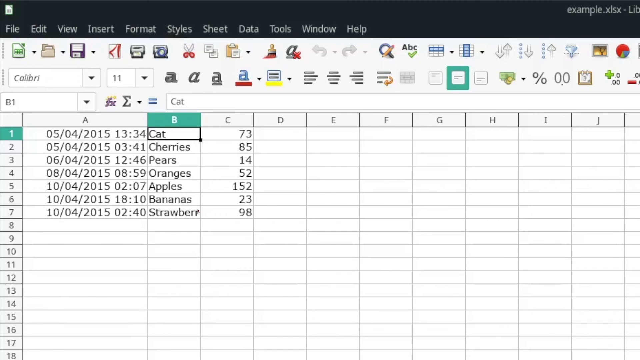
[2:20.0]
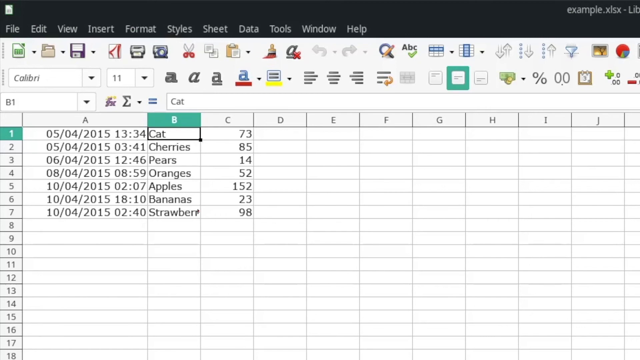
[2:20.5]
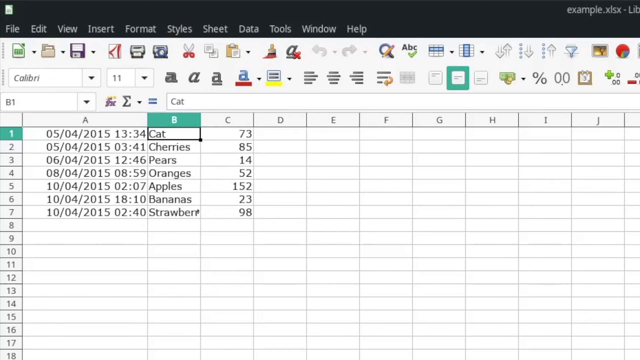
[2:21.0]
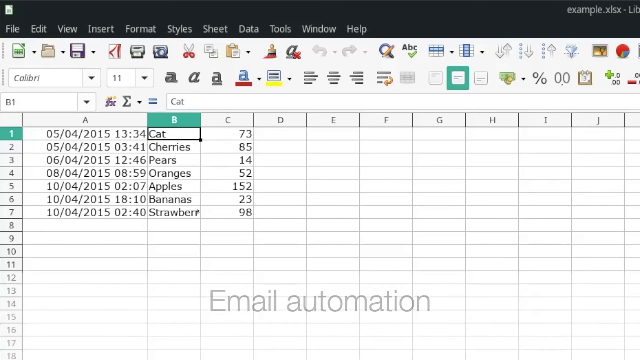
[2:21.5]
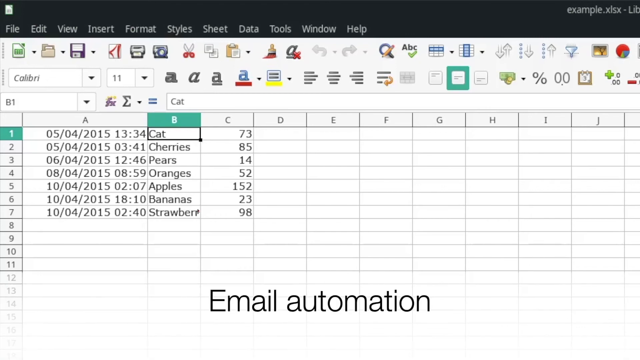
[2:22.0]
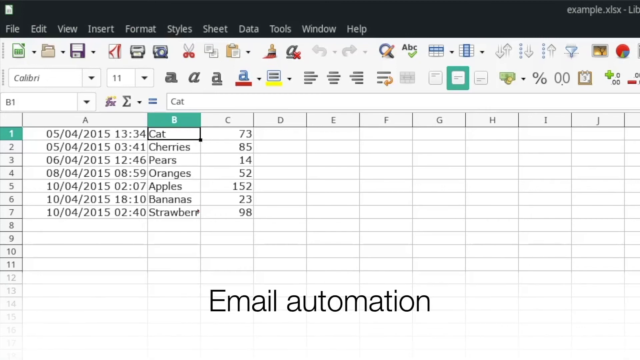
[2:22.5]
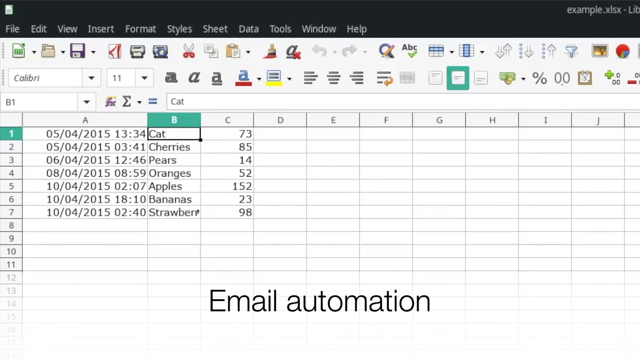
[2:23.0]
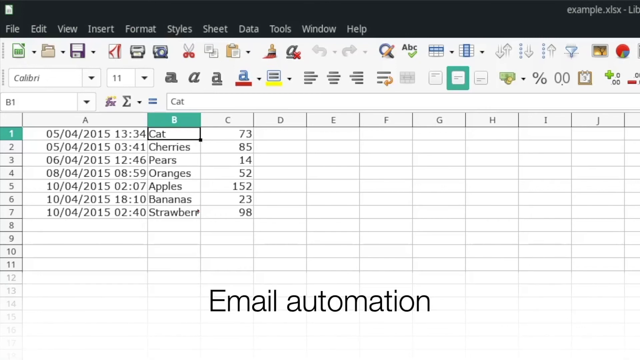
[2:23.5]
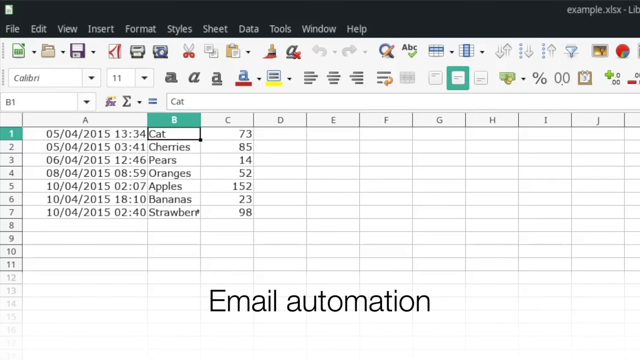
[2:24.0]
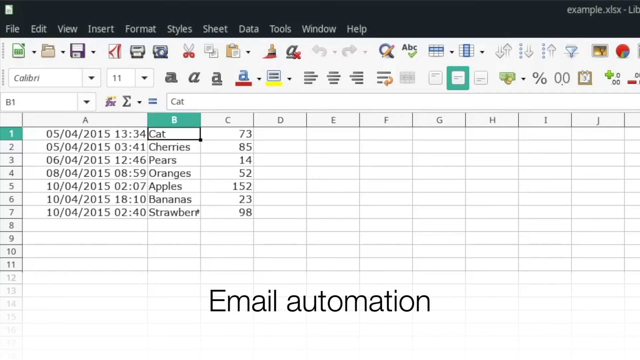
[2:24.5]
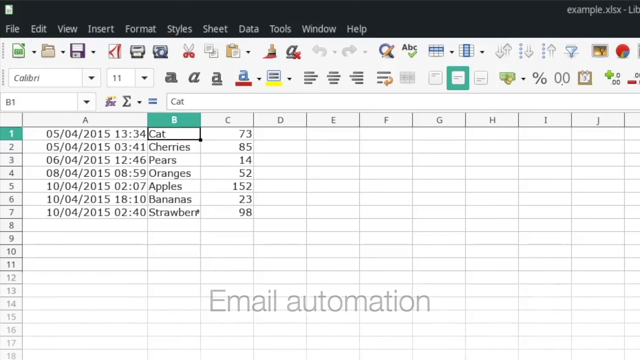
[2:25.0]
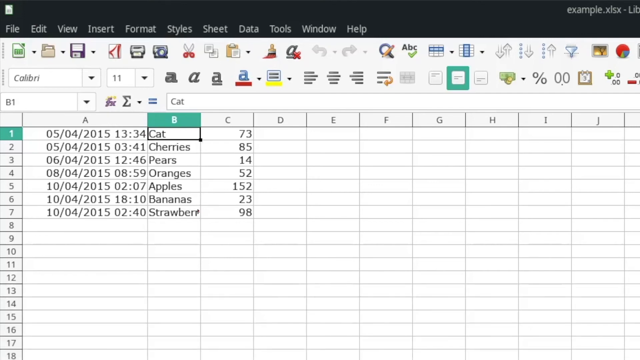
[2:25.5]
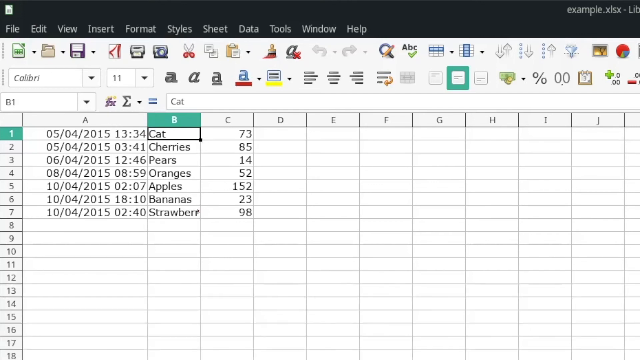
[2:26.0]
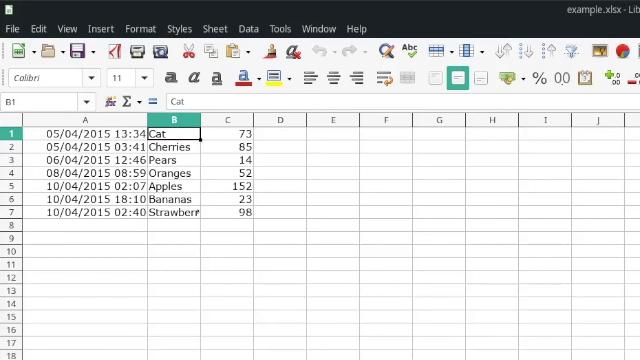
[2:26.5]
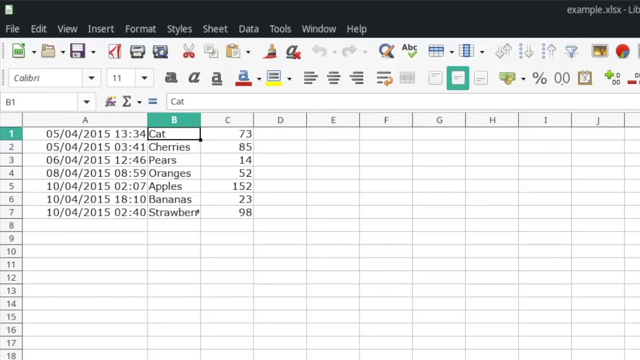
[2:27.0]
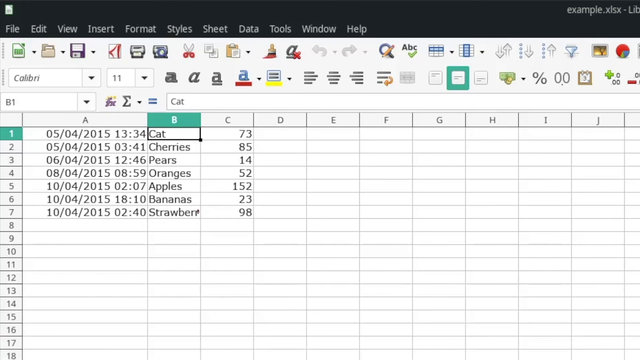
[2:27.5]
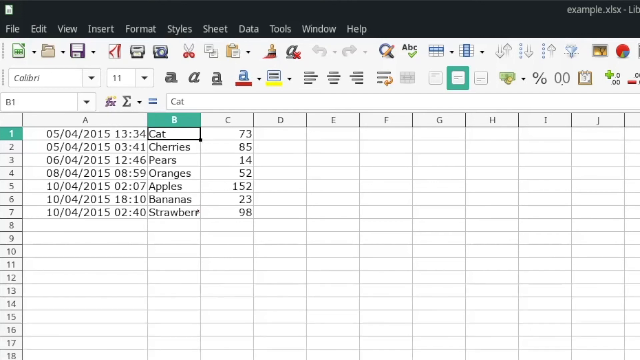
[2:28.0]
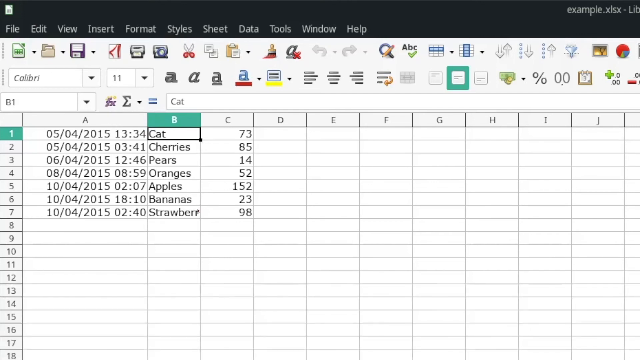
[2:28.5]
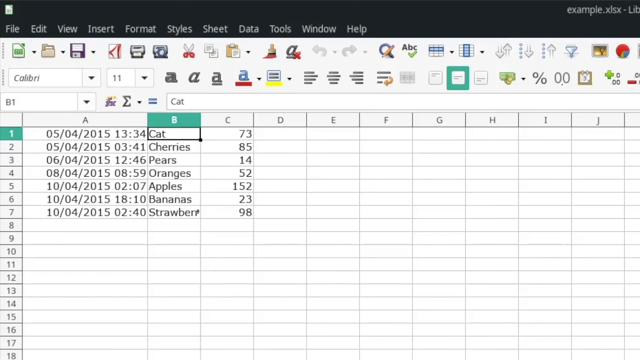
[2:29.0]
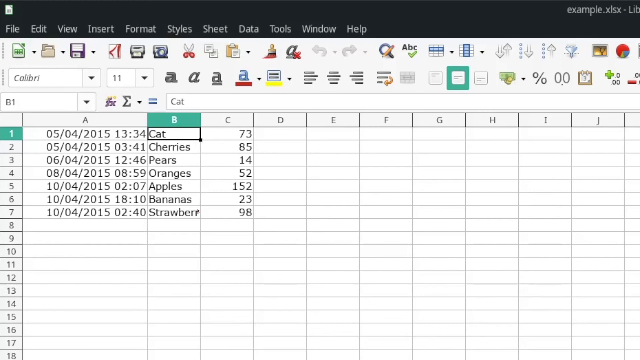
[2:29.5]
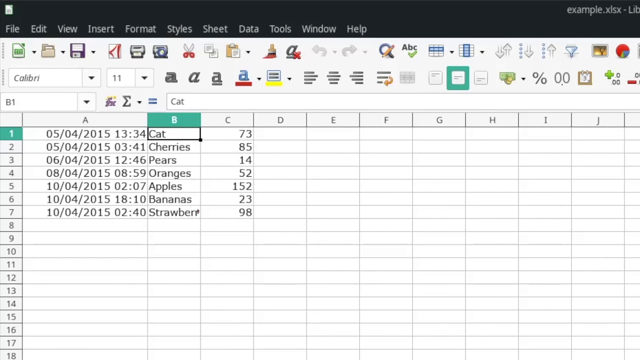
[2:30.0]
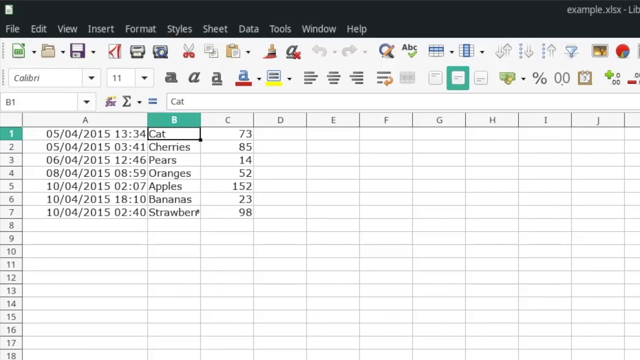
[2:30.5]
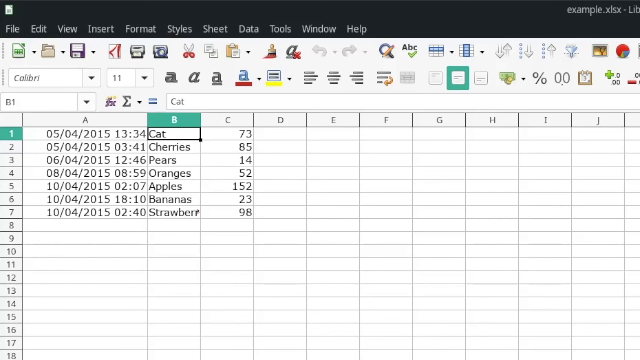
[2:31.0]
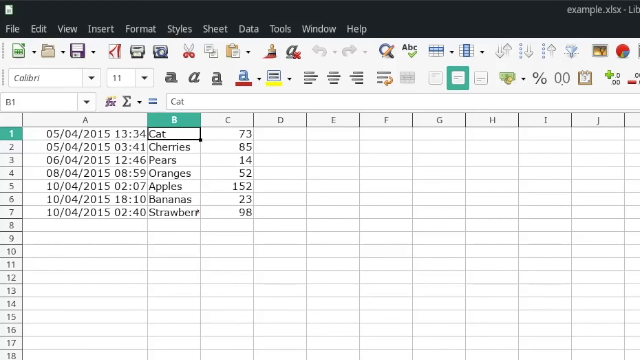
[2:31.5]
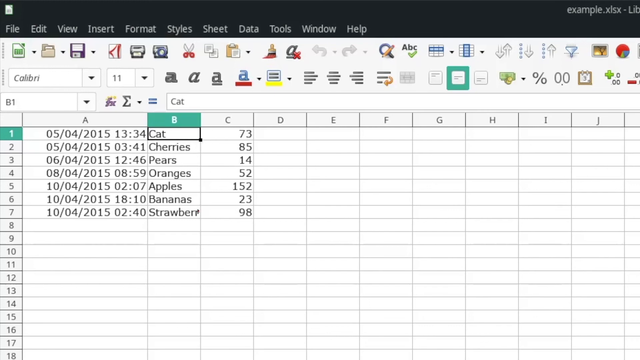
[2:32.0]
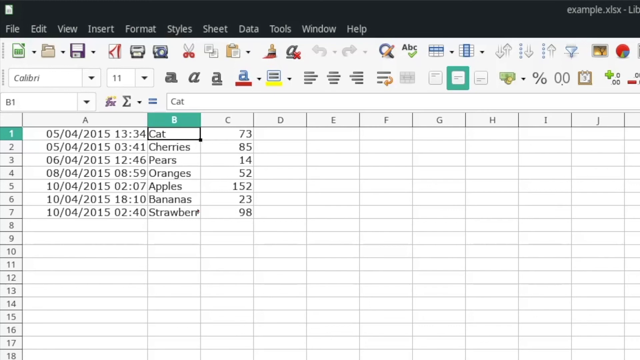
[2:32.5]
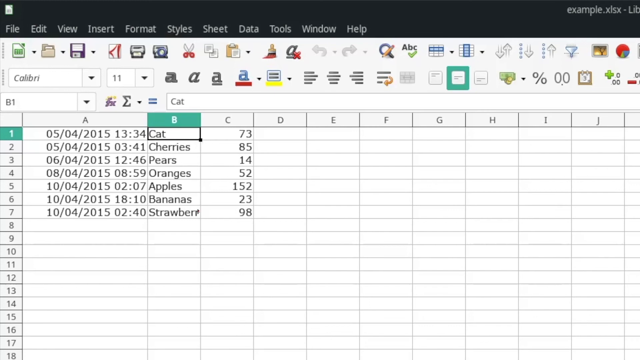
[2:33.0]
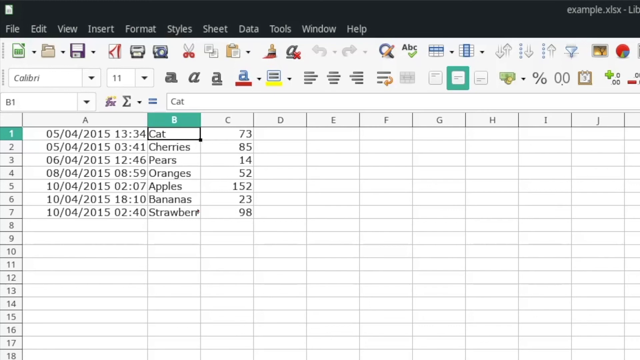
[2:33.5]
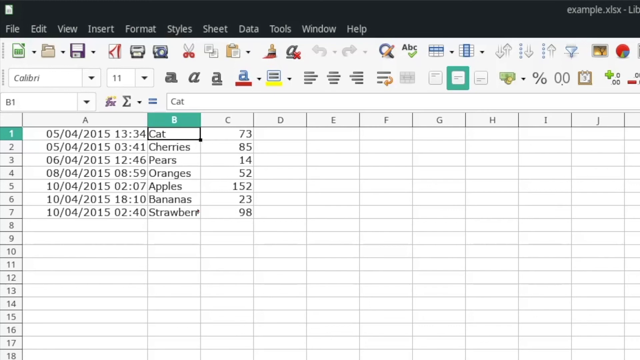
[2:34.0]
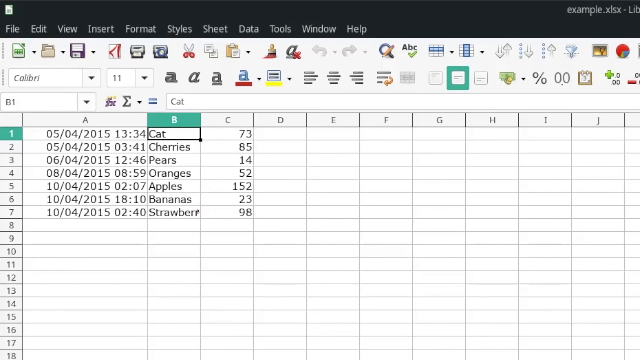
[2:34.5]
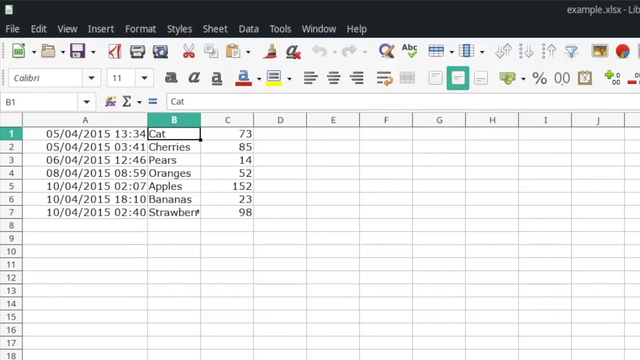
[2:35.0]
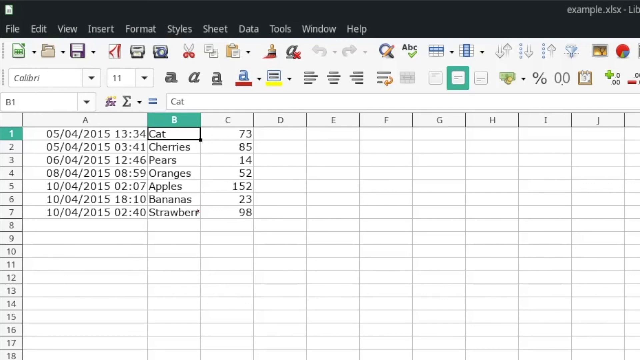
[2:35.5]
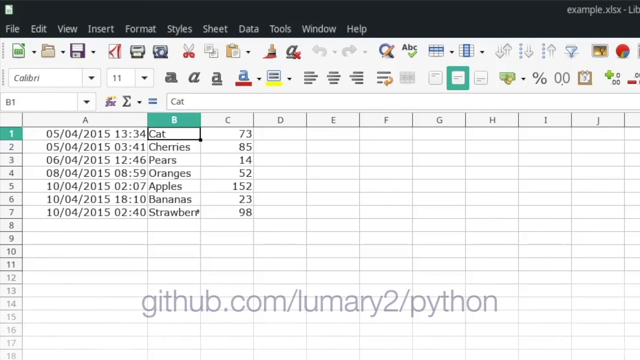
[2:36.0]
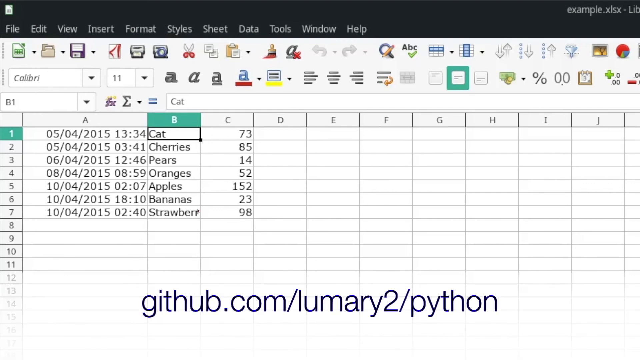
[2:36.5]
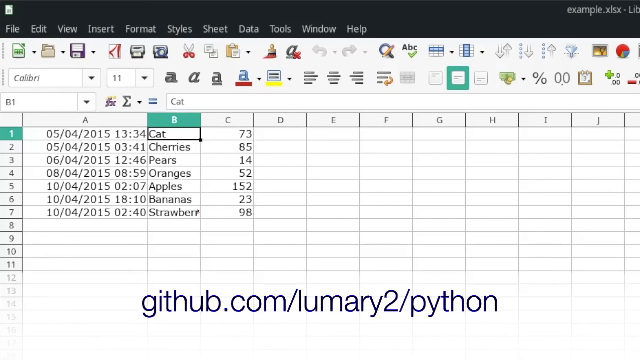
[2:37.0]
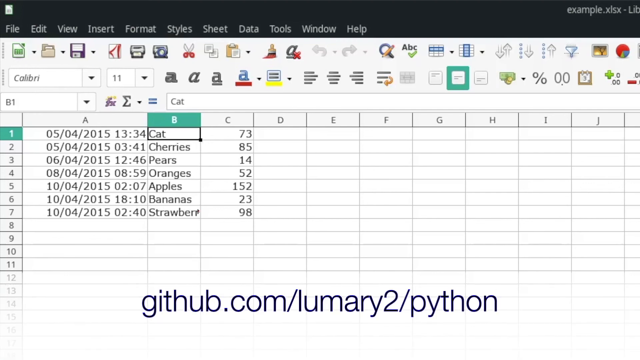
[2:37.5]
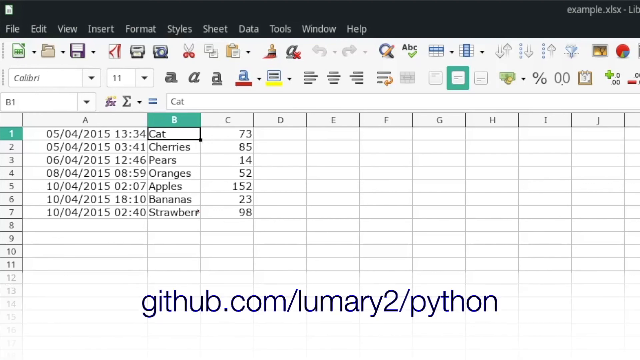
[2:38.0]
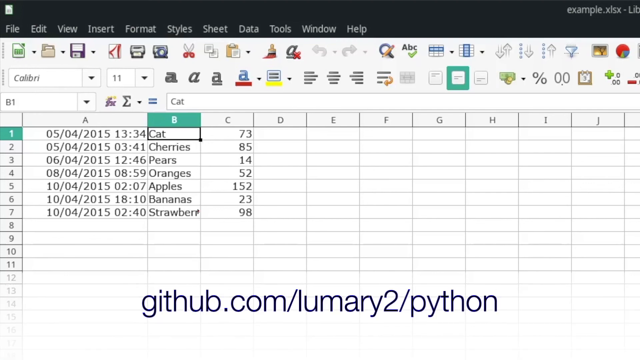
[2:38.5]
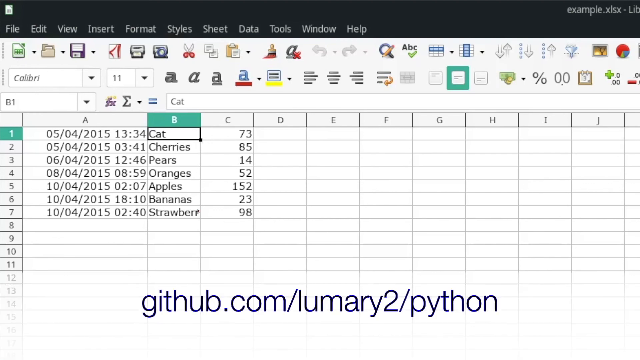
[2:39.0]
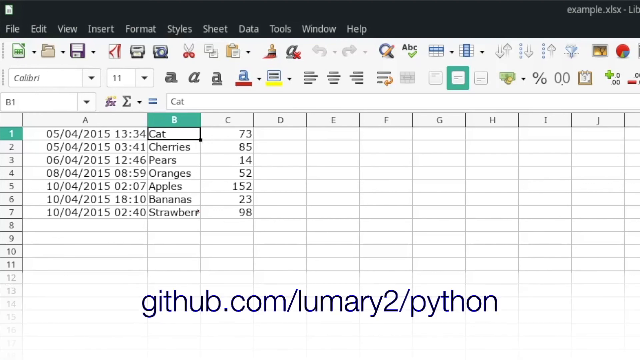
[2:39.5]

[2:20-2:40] A computer screen has a black strip at the top, with "example.xlsx - light" written in light gray in the top right-hand corner. Going from left to right in the strip are the words "file, edit, view, insert, format, styles, sheet, data, tools, window" and "help." Below it the screen turns white, and the first line holds about 20 icons, including ones that look like computer disks, one that looks like a pair of scissors, a paintbrush, and one with the letters "ABC" and a green check underneath. In the next line, the first two items are square white boxes: the first says "Calibri" and the second has the number 11. Beside them are four little letter A's in different fonts.